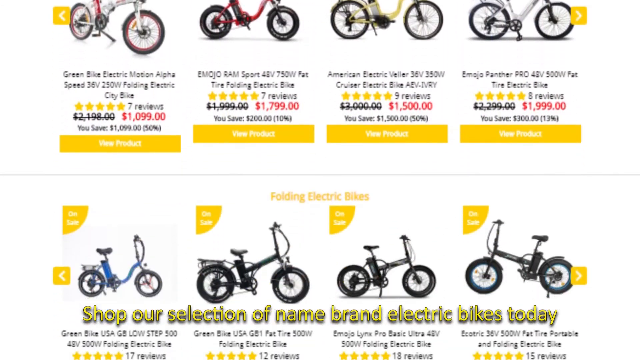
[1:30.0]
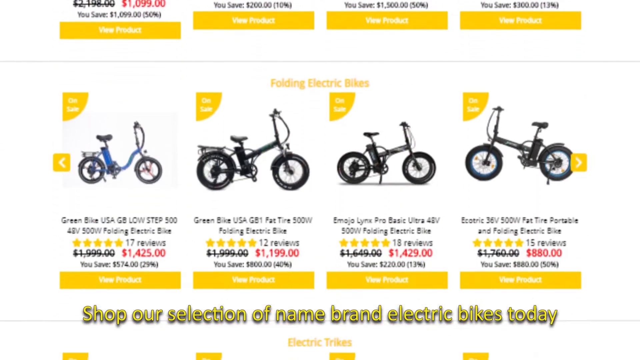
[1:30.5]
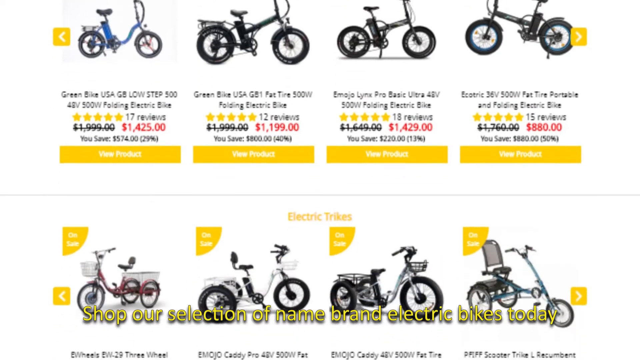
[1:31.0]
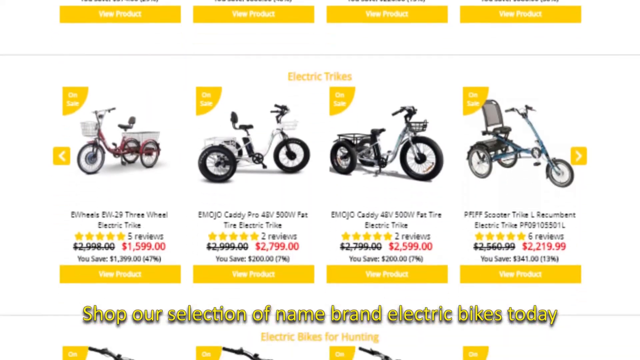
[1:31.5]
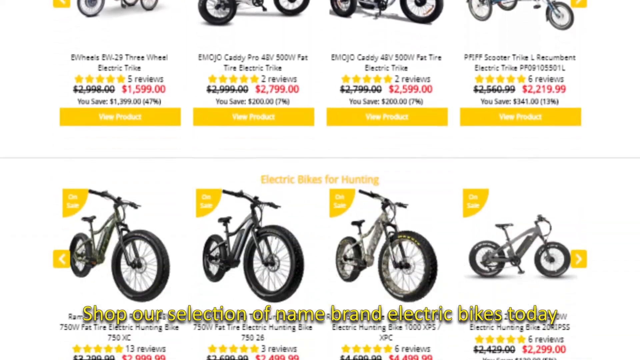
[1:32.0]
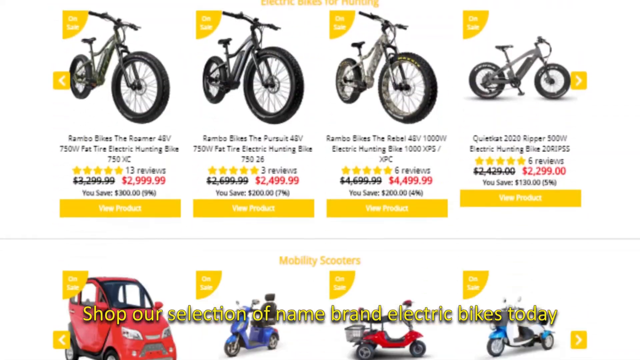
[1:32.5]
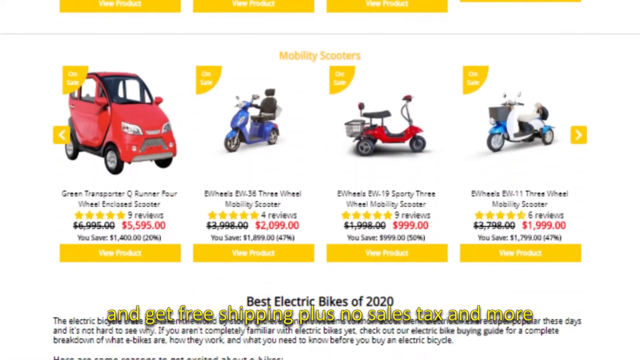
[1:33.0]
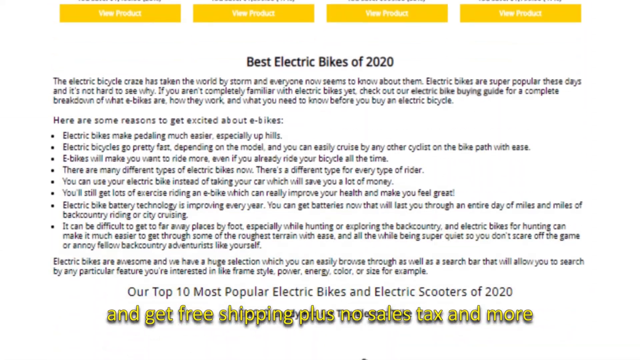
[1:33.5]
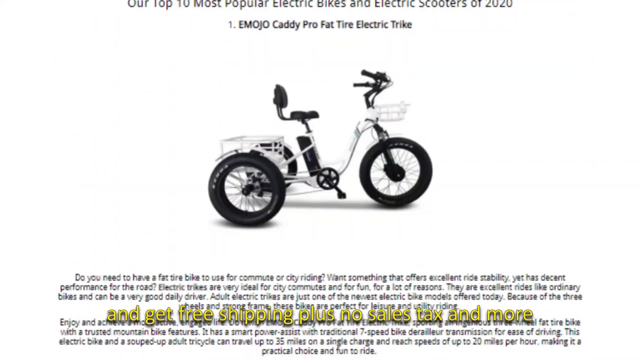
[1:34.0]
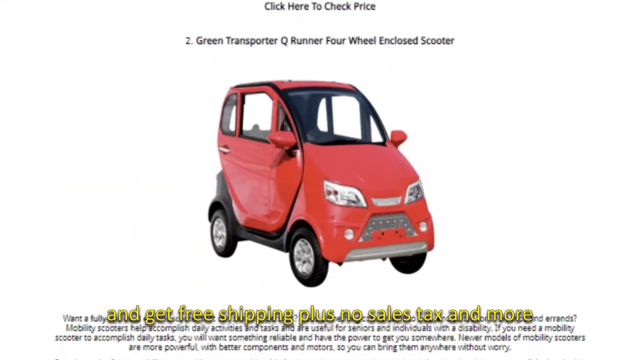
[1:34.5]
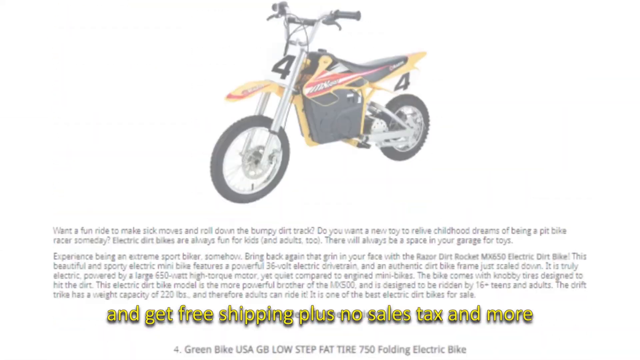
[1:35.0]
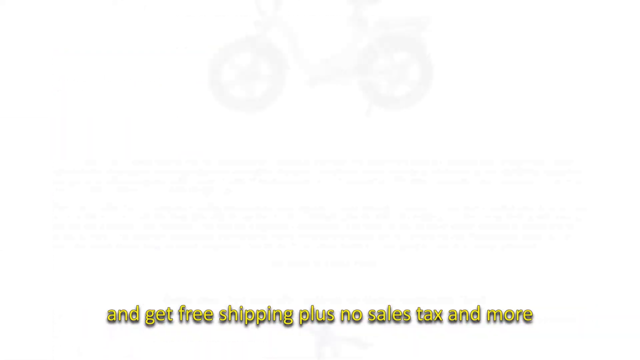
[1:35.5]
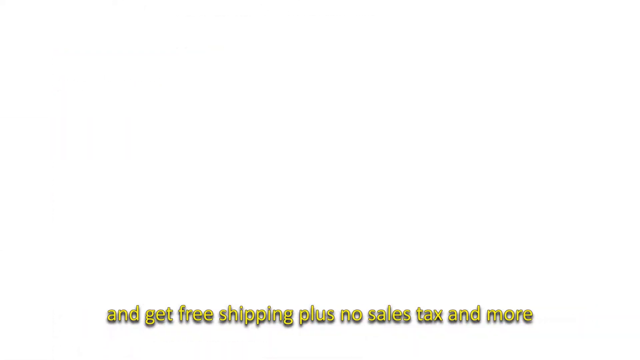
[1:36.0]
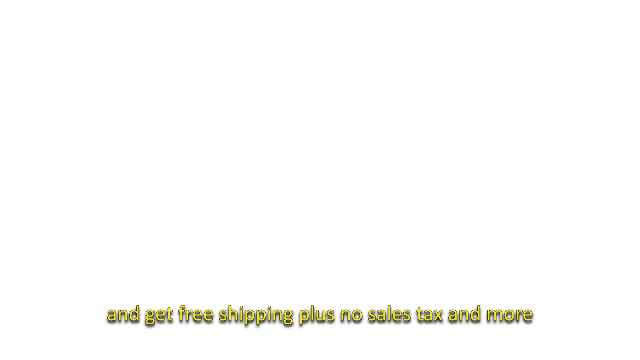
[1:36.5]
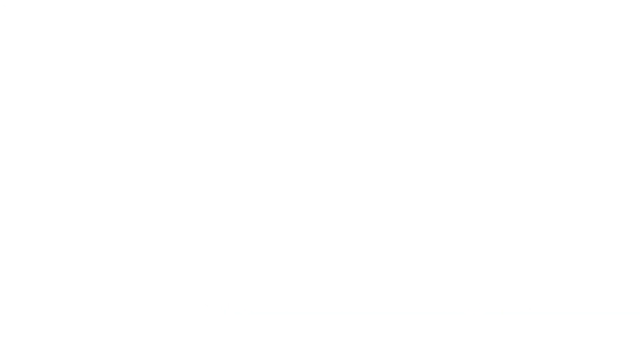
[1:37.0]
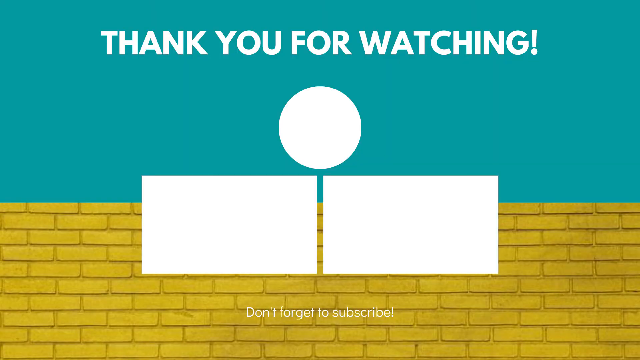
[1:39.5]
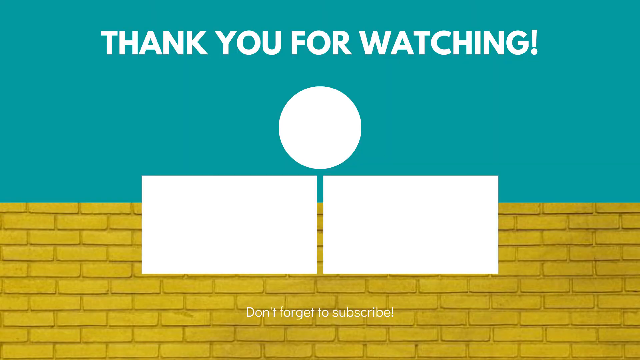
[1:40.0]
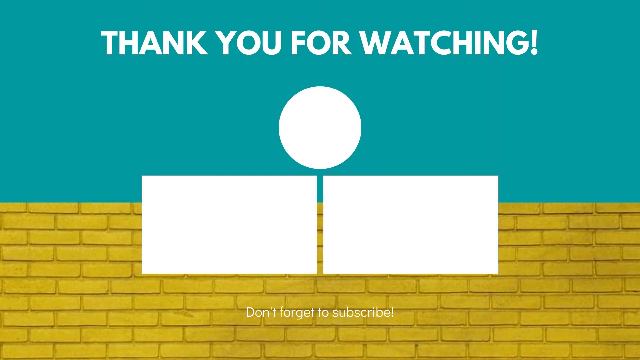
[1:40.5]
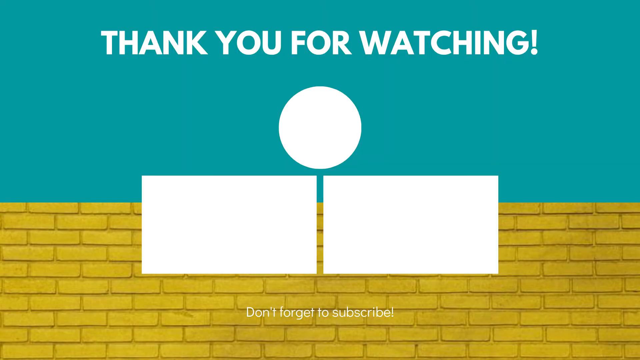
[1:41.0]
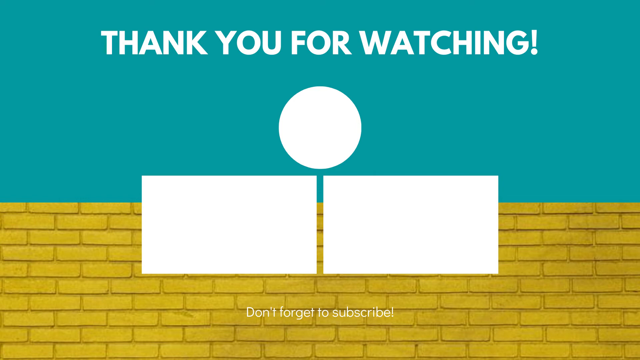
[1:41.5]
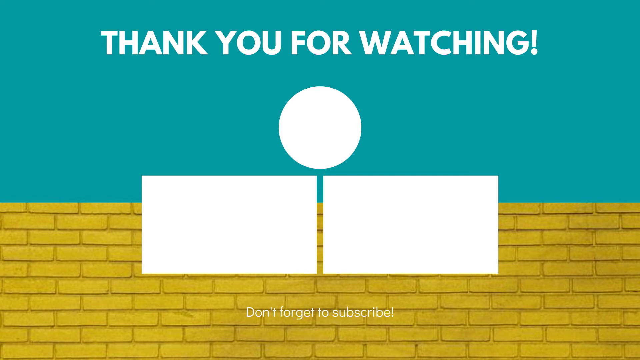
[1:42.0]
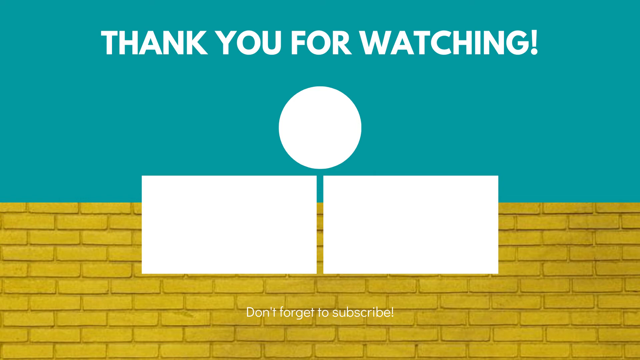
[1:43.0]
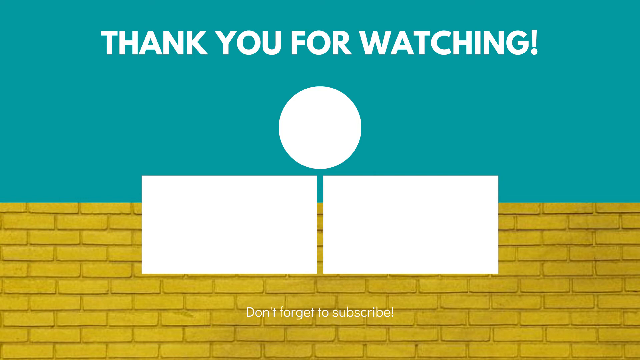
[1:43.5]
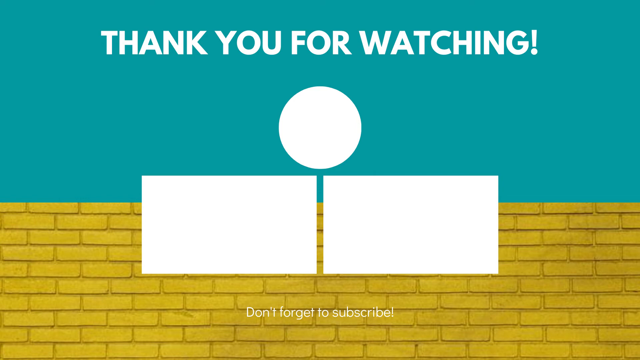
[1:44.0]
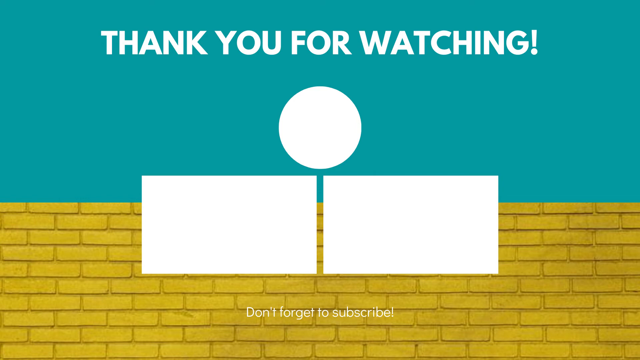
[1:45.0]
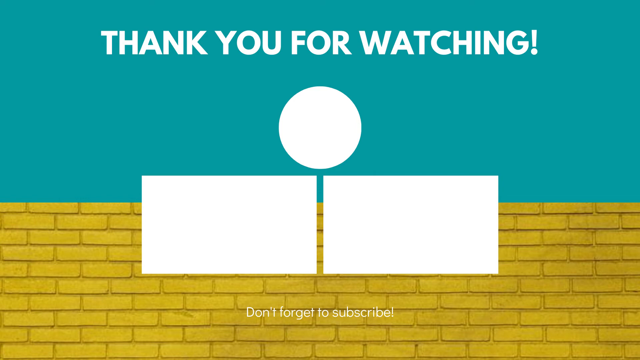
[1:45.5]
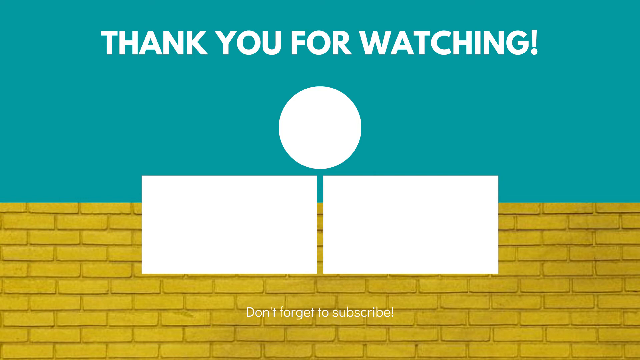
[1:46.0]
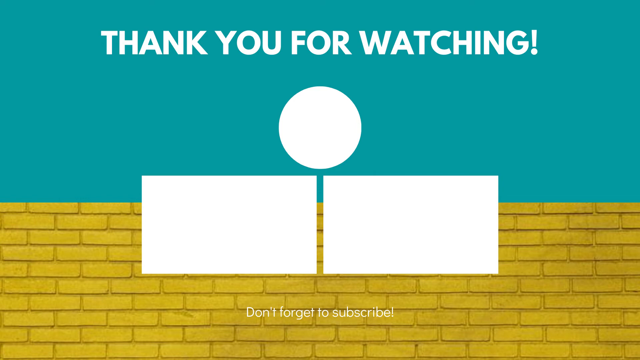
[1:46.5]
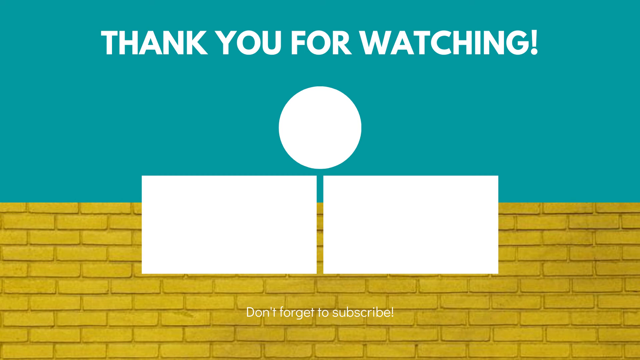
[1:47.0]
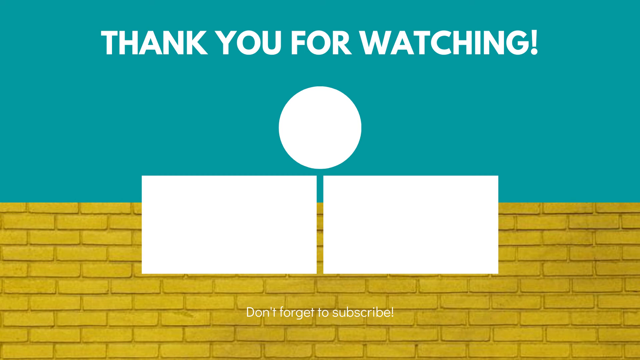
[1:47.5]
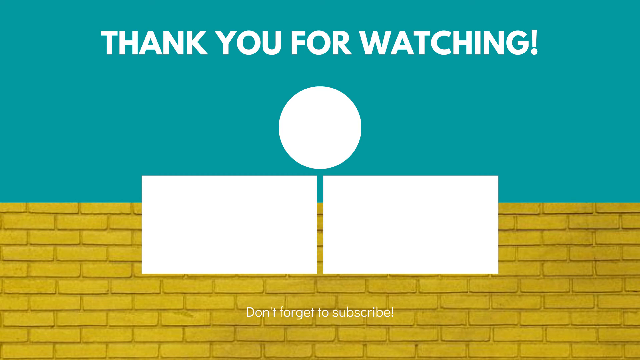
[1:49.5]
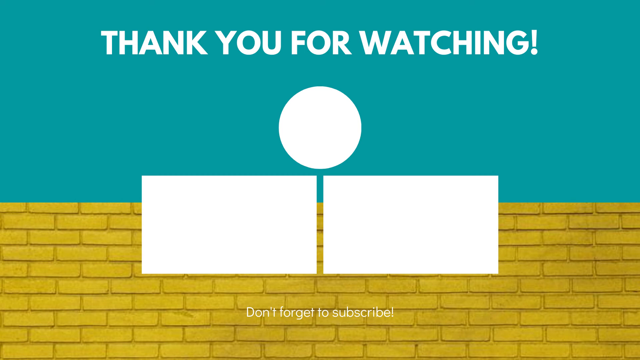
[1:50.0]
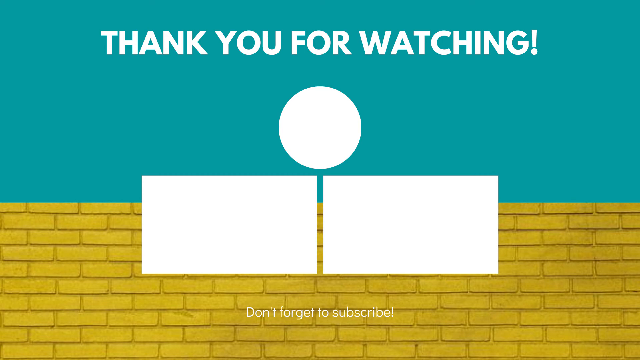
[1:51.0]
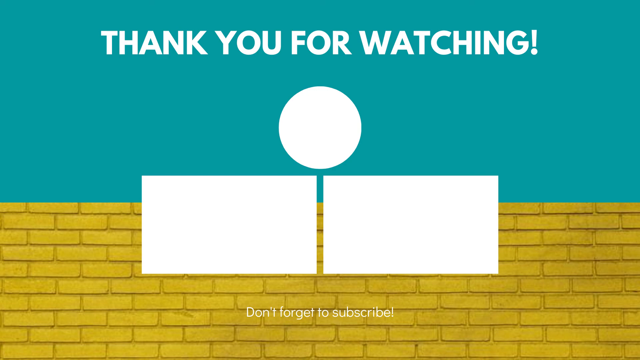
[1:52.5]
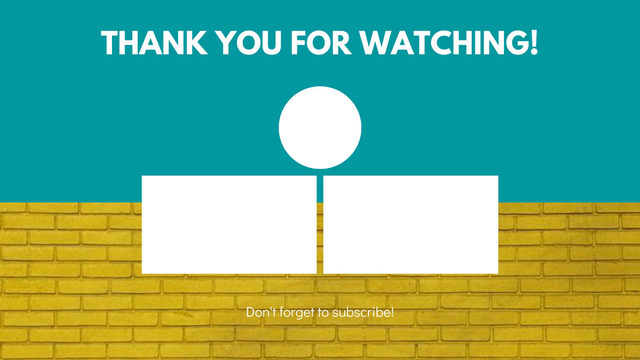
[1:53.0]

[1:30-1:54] The www.electricbikeparadise.com page shows various other products sold by the company, and the page for the Nakto Elegance bike shows a retail price of $619, saving $679, 52% of the original price of $1,298. Fast and free shipping is emphasized, along with no sales tax outside of Wyoming, and the 7% cash back is emphasized, underlined in red. The cruiser electric bike, with a plastic bucket in front, has 13 reviews. The video ends with a page reading "Thank you for watching!" on a blue background in the upper section, with two white square boxes and one white circle, and "don't forget to subscribe!" at the bottom on a background of yellow bricks.